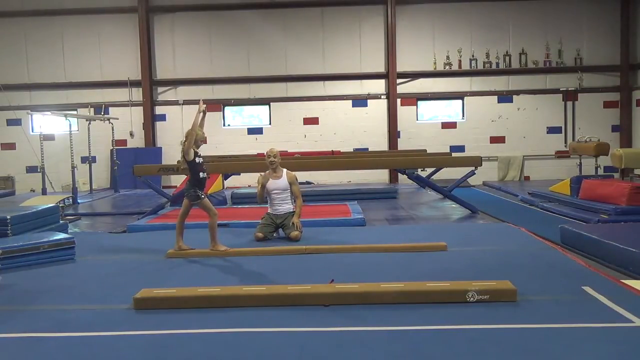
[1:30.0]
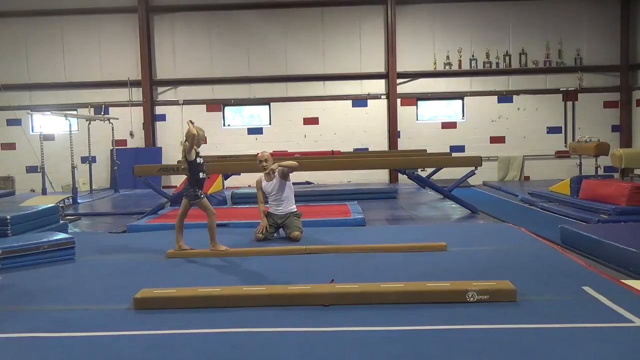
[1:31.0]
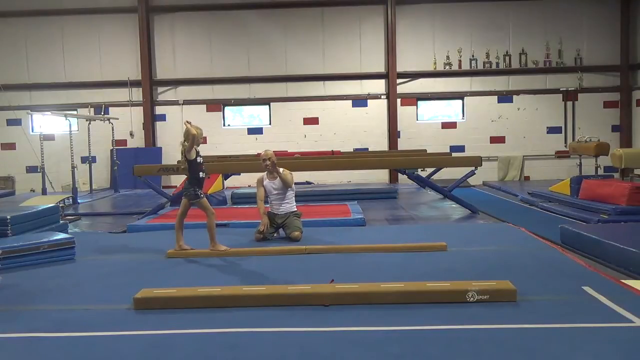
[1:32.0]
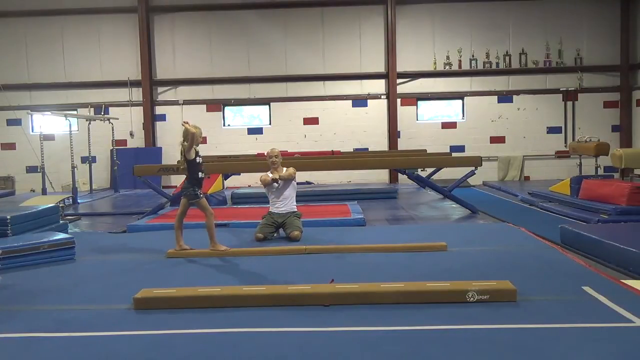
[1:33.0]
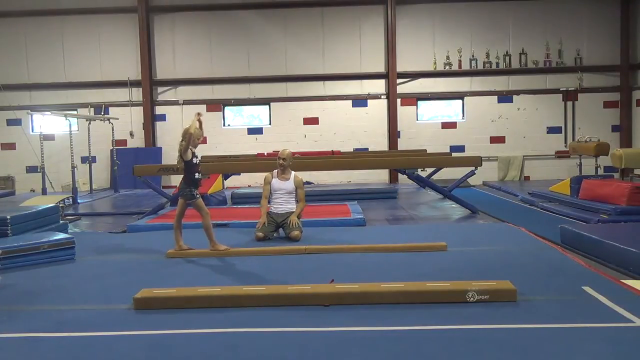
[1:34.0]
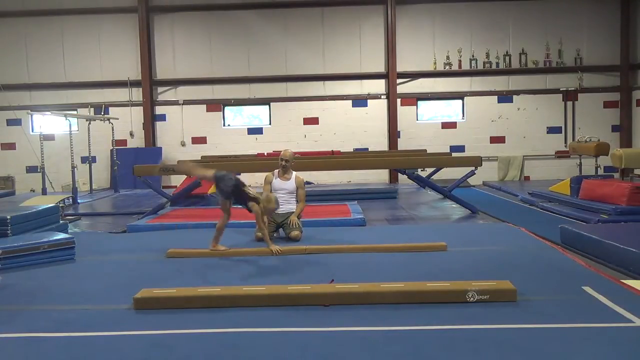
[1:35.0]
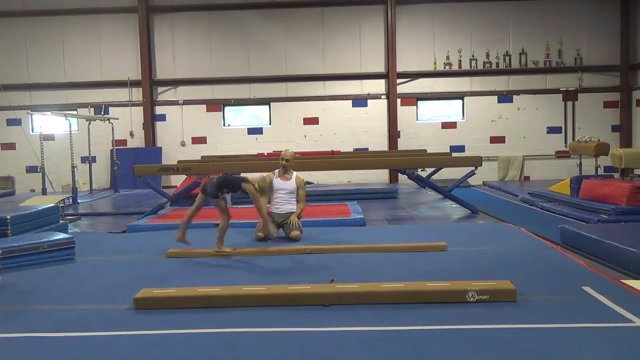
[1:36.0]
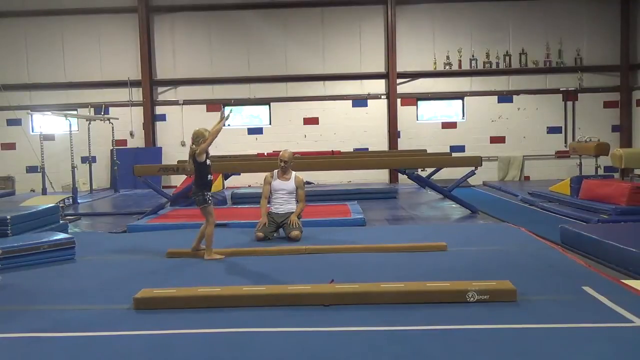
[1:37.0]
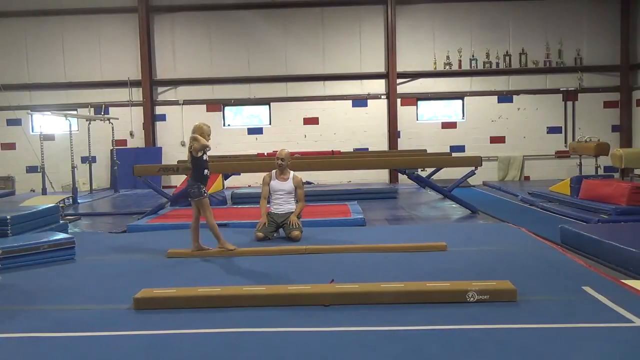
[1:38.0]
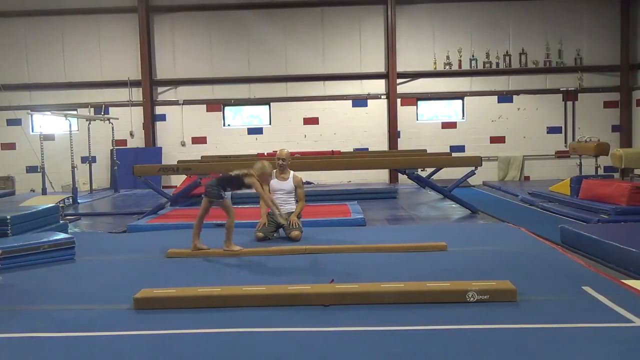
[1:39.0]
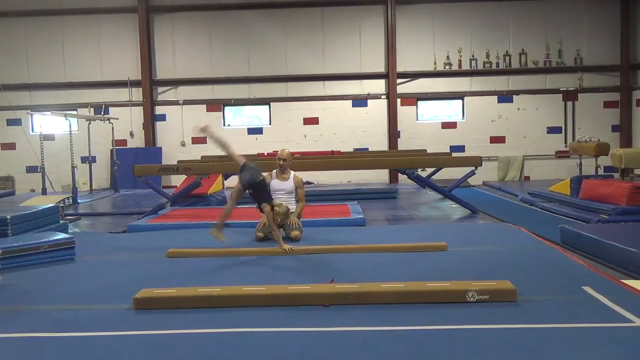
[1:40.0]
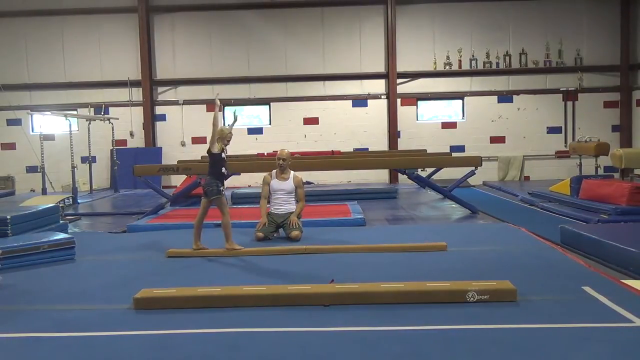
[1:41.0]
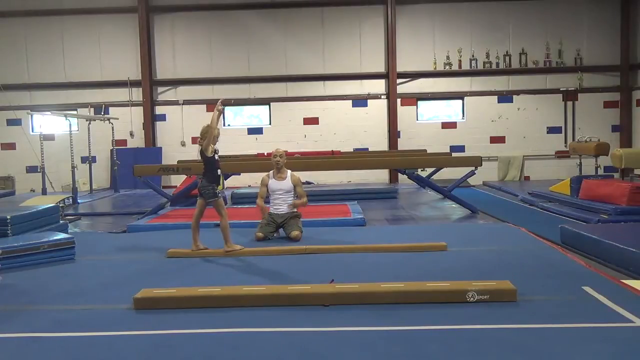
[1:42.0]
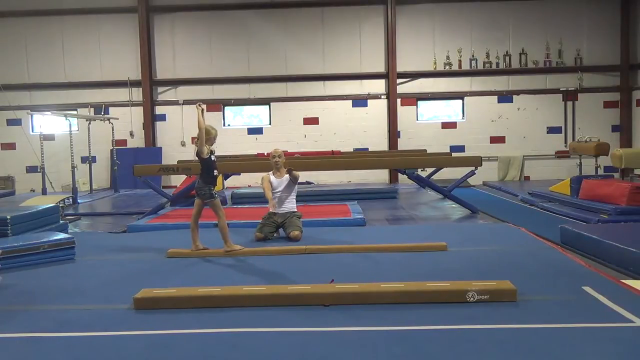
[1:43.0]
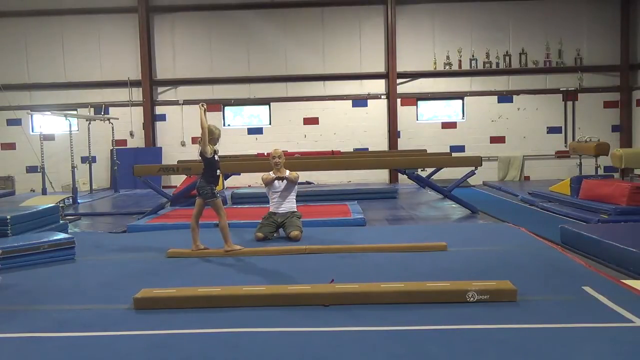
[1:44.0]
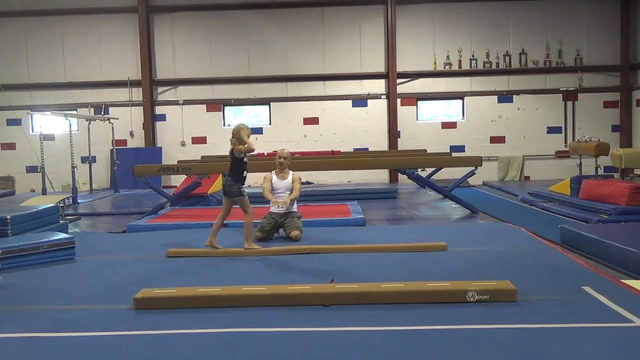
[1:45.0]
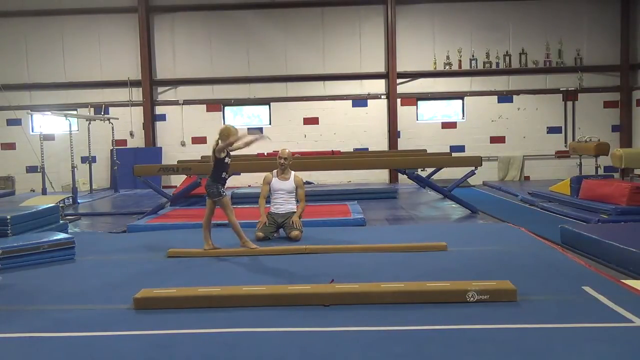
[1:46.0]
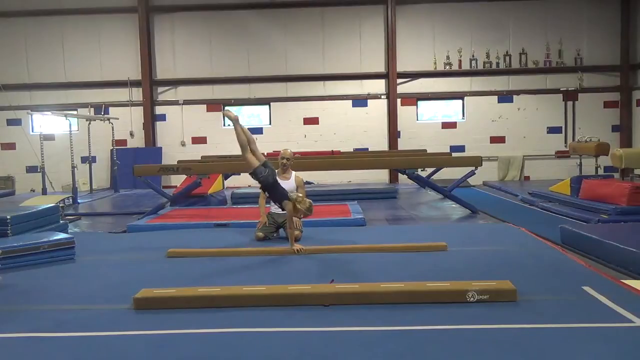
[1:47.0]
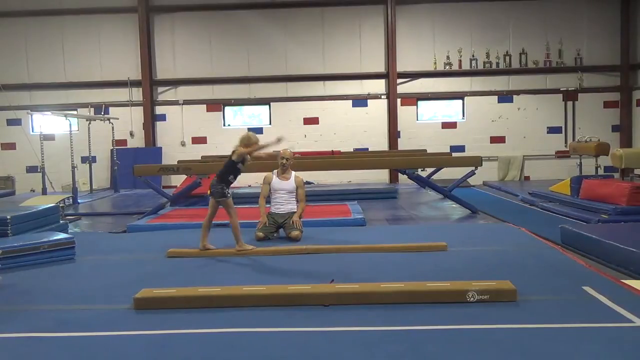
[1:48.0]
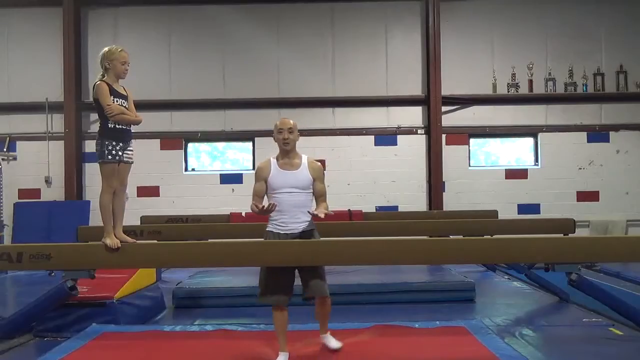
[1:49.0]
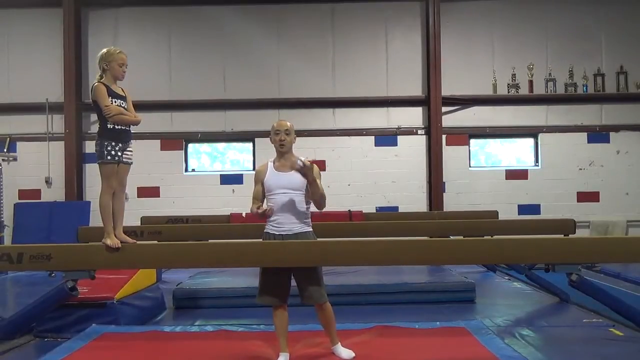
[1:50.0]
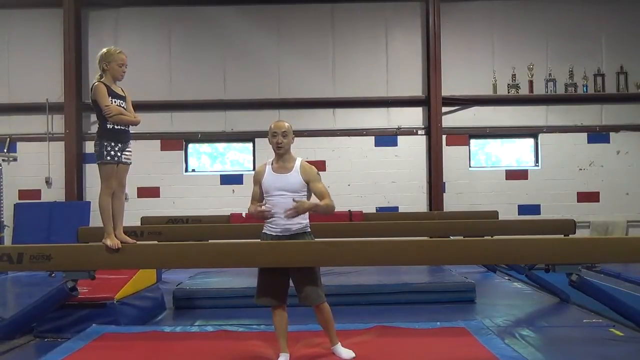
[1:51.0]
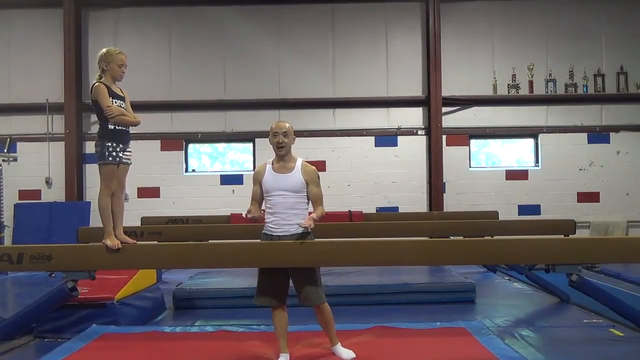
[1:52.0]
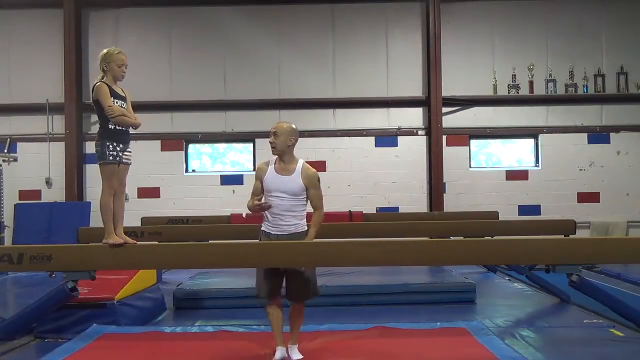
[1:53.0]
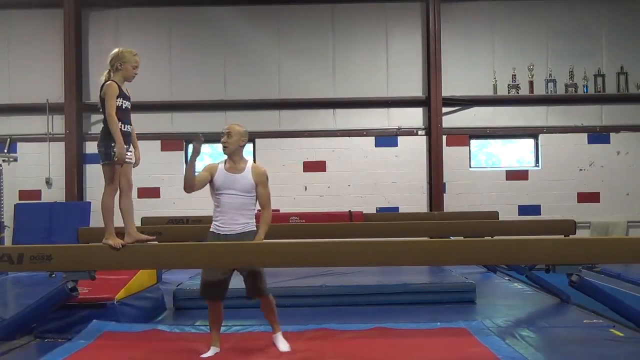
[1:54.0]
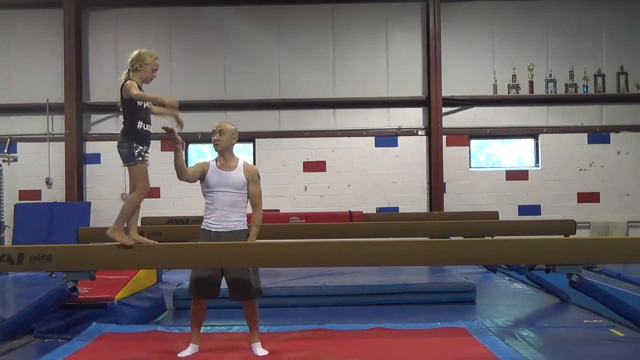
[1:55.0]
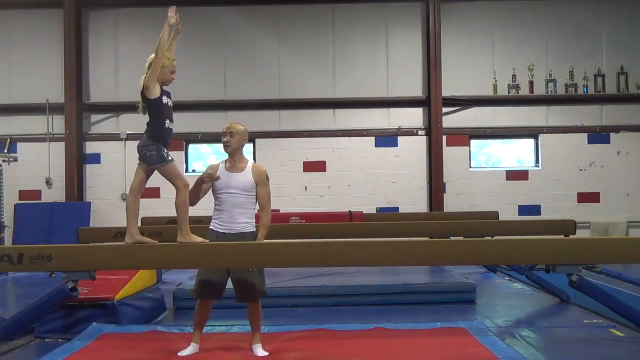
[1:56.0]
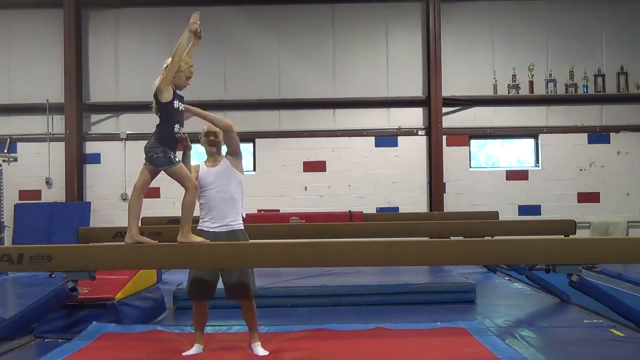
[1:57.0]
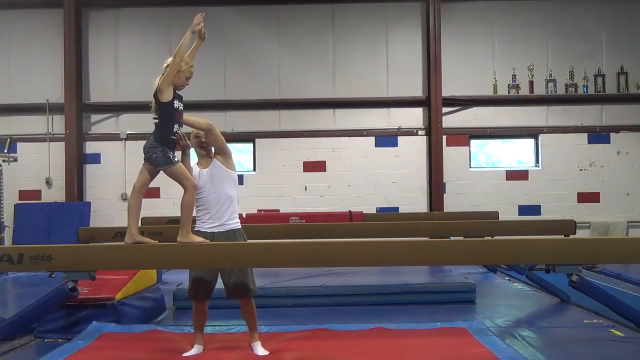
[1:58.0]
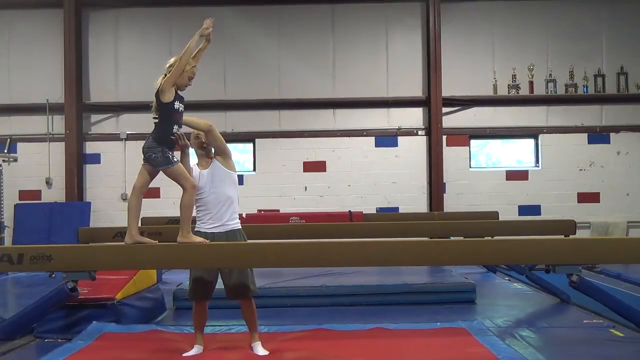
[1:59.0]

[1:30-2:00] A little girl does a number of flips on a wooden beam. Right behind the beam, her instructor, a coach, kneels on his knees and watches her perform the gymnastics tricks. In the top right section of the frame, trophies are lined up against a white wall with patterns of different colors.